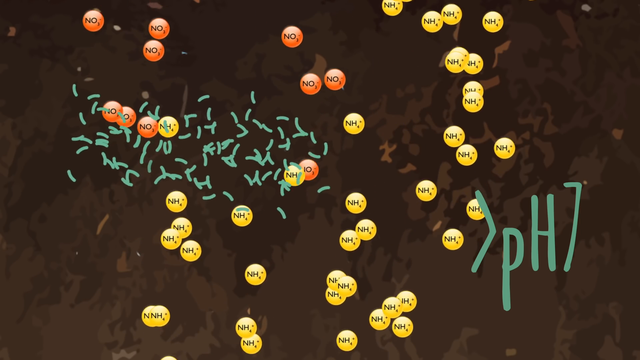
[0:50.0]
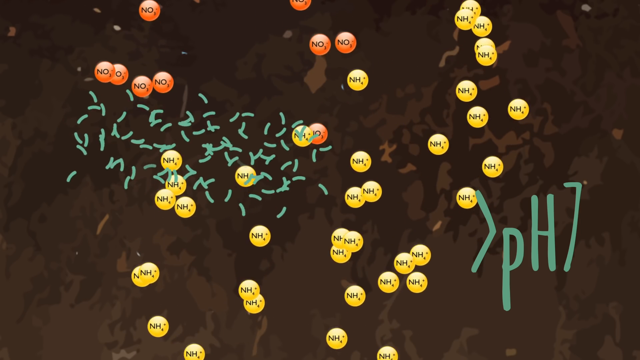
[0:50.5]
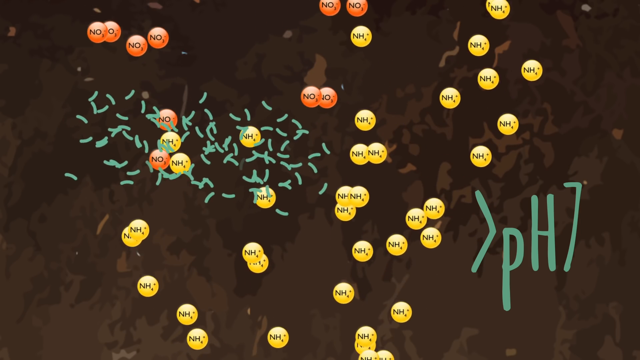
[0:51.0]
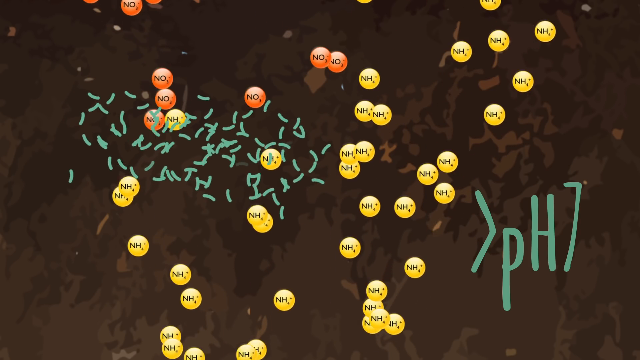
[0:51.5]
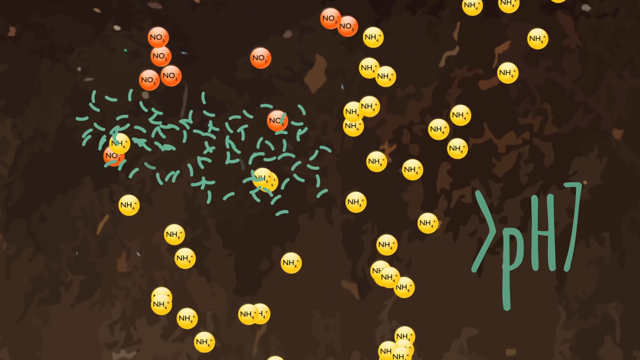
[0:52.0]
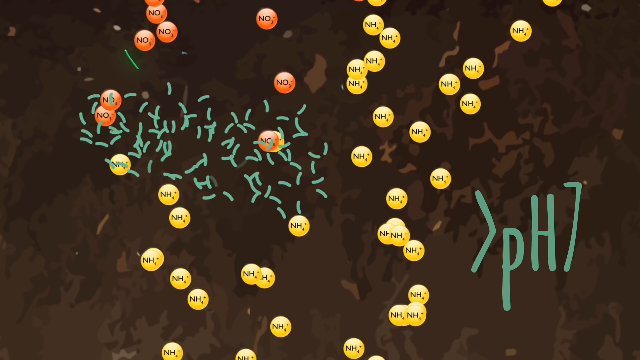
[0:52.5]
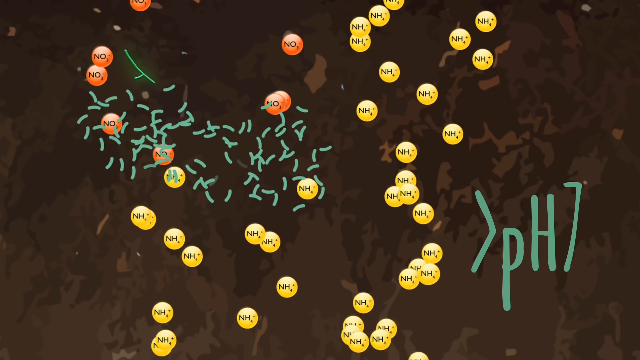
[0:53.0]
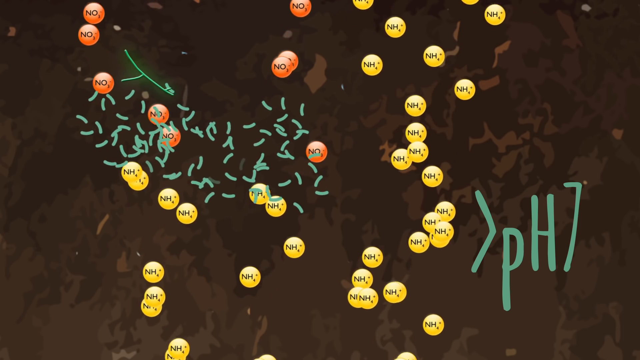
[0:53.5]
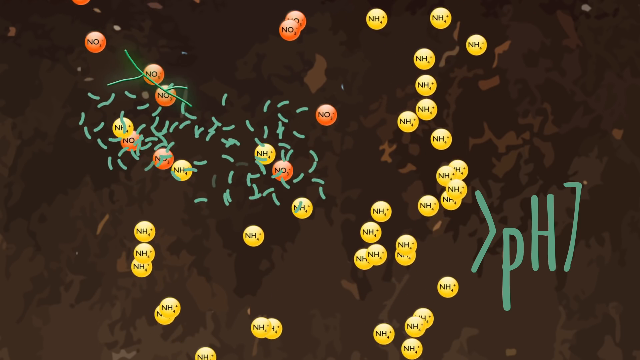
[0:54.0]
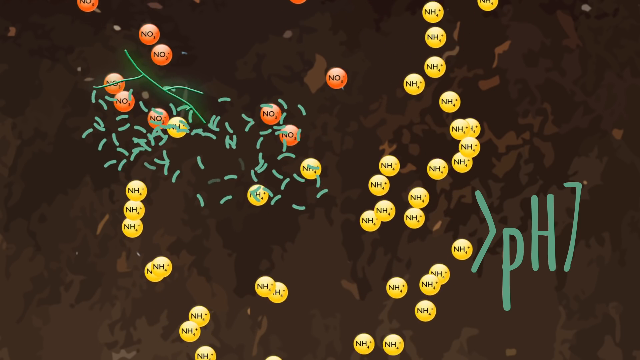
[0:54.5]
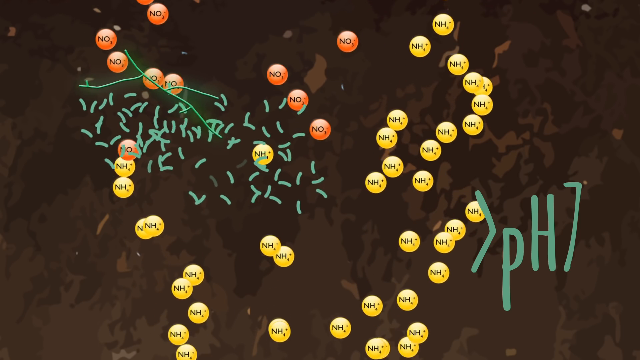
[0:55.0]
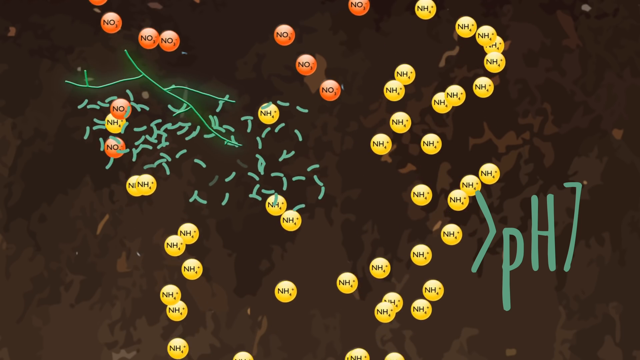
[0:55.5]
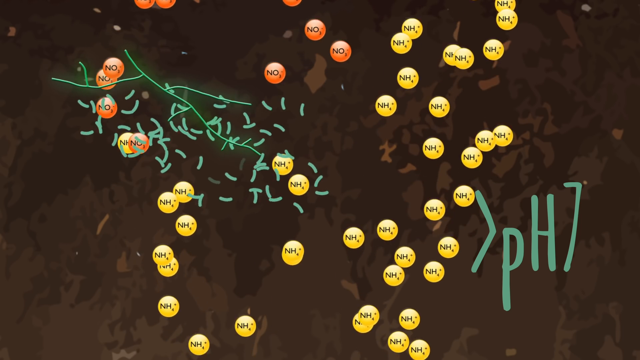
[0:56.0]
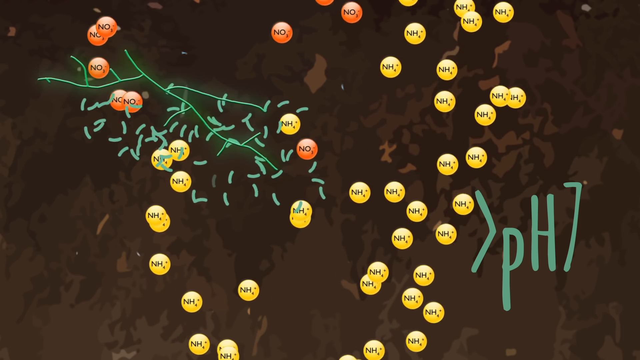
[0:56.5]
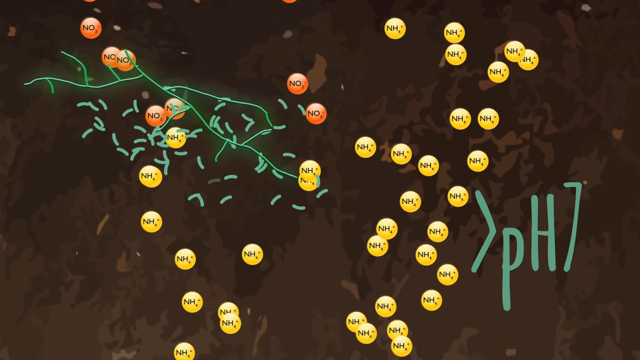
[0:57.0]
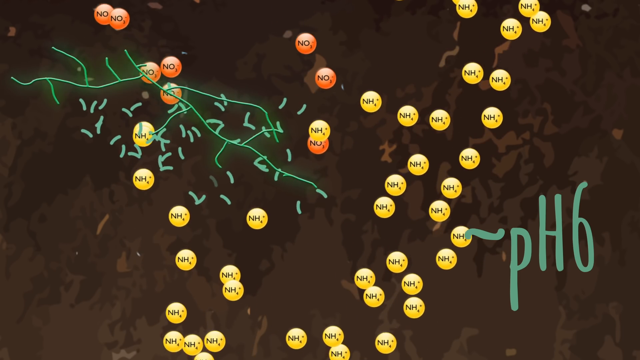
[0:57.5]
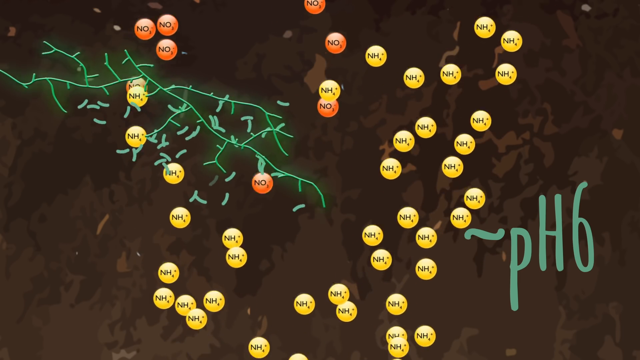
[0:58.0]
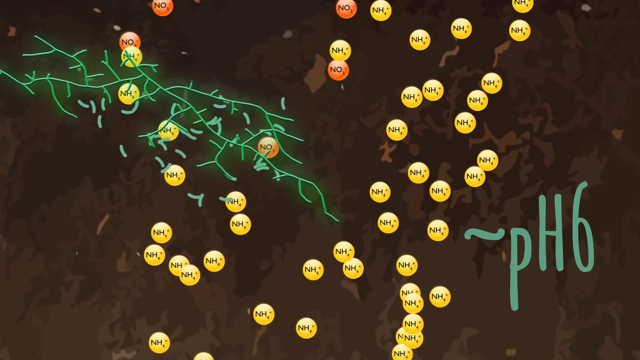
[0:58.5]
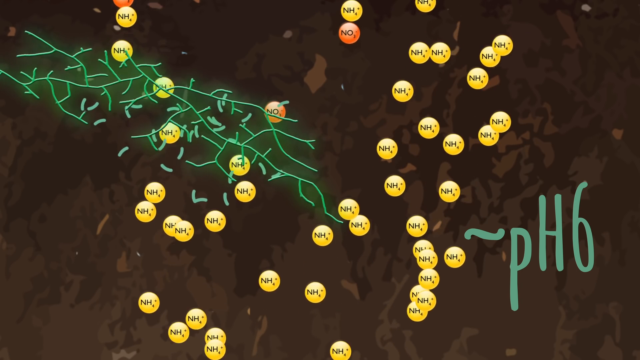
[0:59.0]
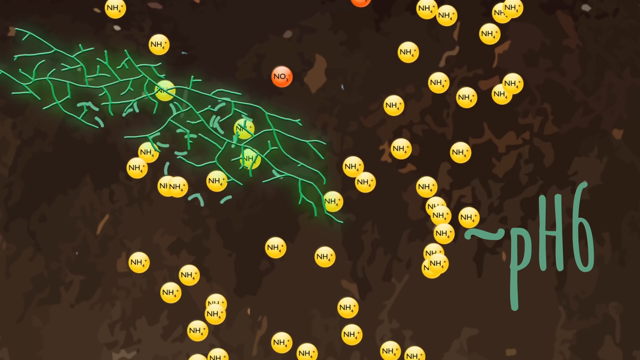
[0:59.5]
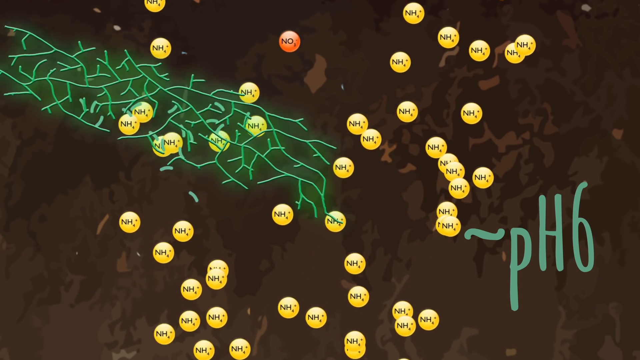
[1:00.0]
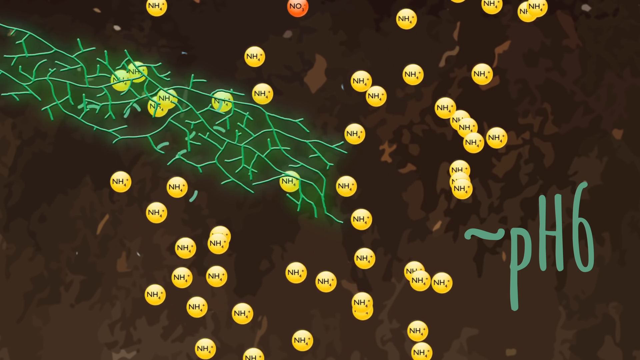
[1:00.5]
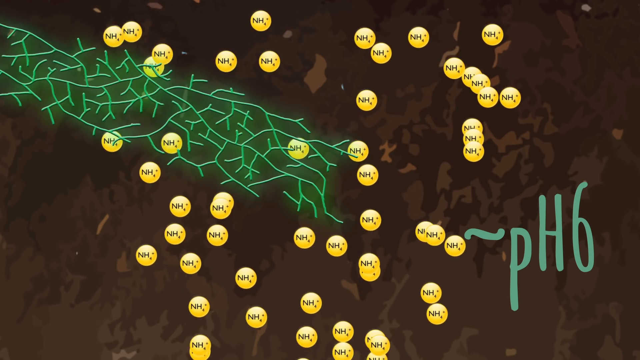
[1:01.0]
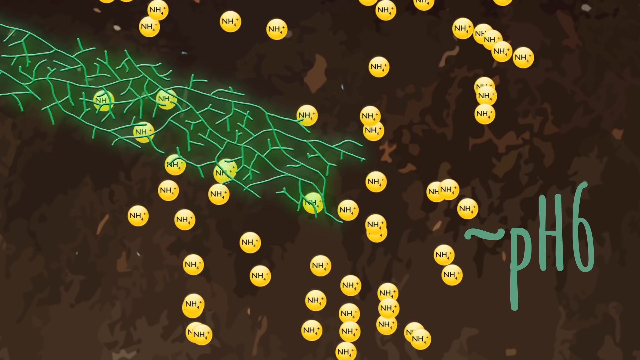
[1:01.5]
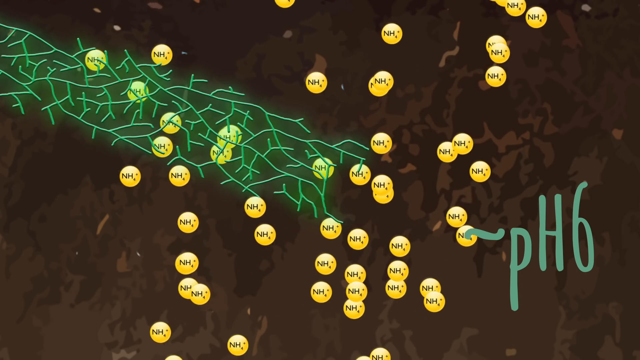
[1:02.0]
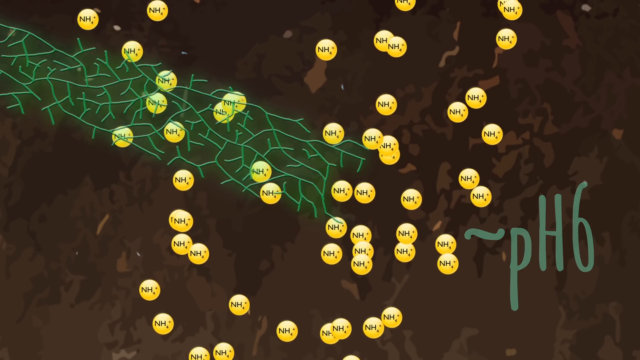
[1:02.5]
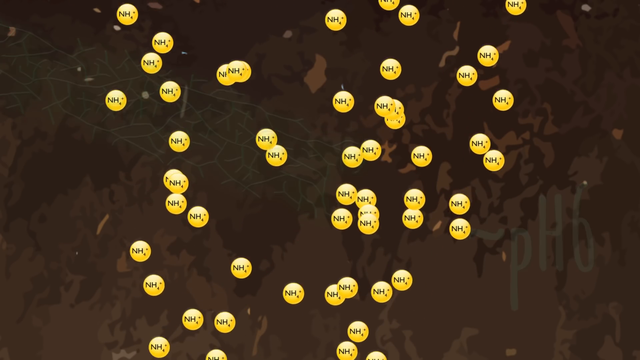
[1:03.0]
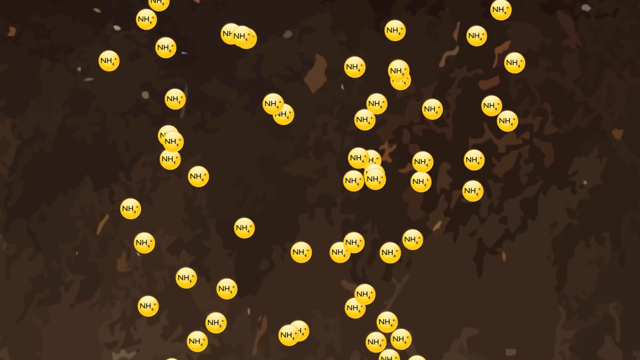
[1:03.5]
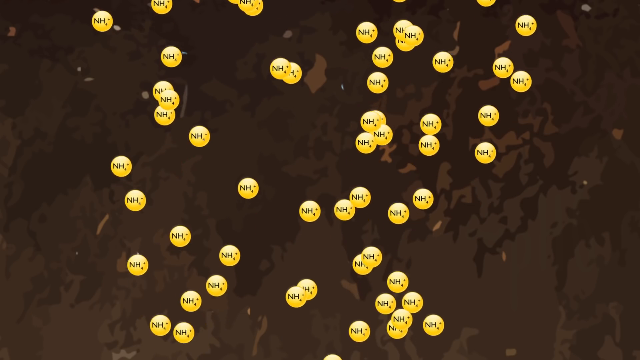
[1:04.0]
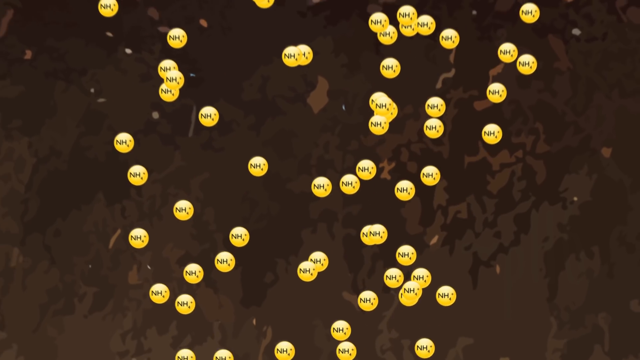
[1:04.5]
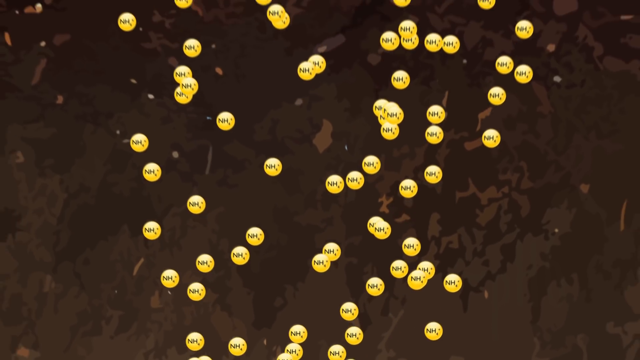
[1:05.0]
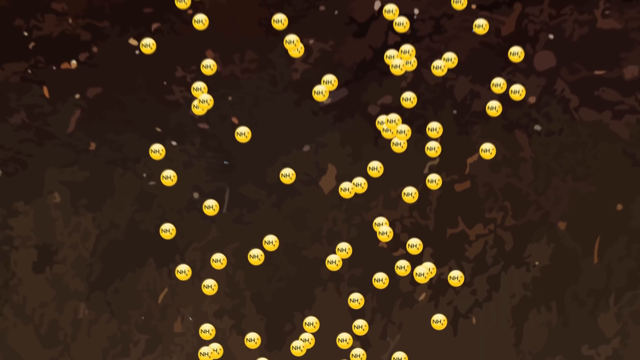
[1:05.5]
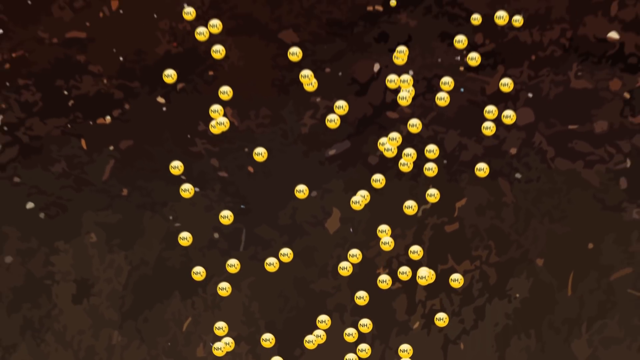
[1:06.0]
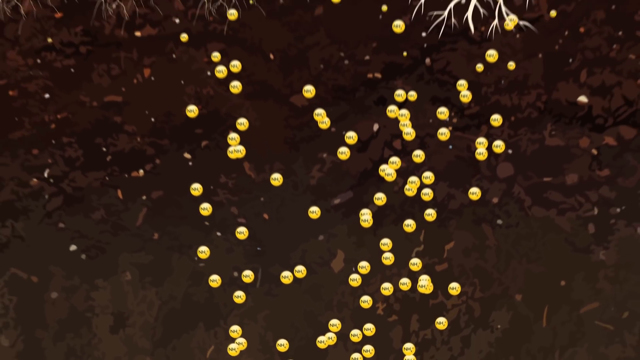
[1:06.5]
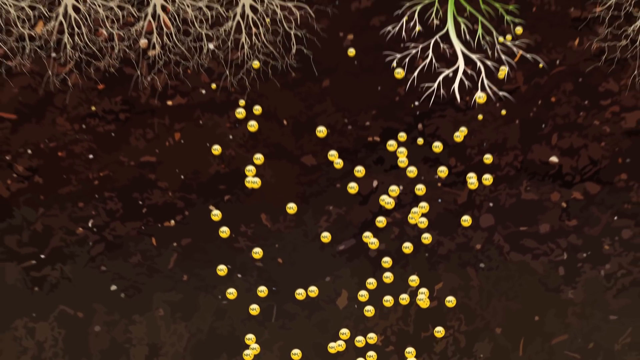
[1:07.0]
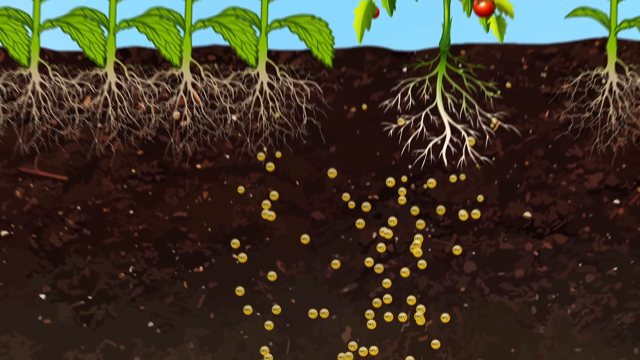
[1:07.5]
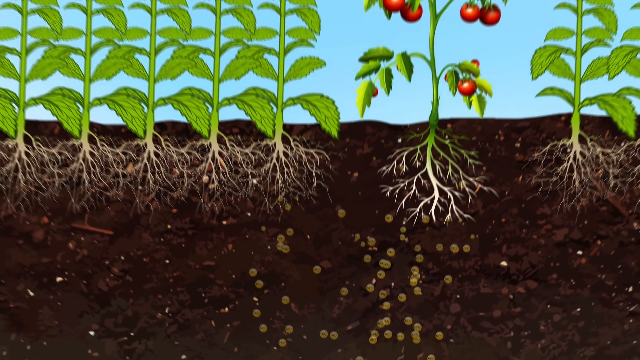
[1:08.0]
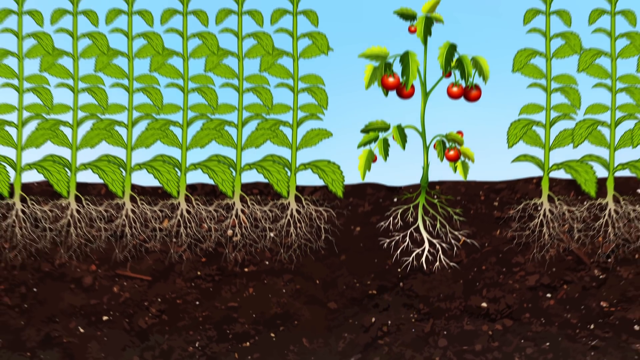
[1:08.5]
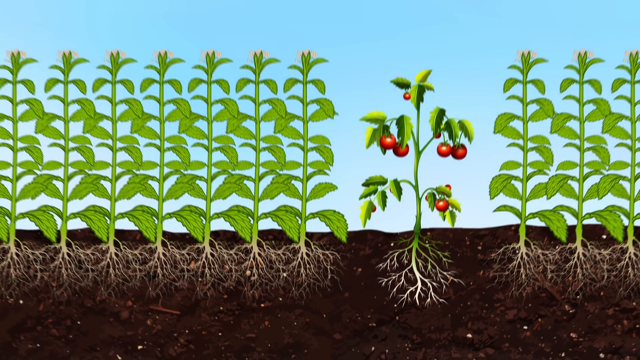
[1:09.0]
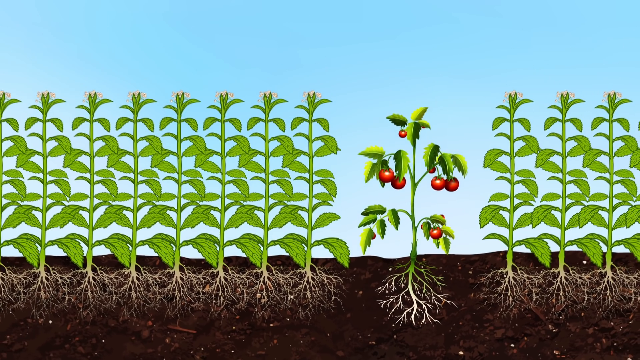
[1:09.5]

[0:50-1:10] On a brown background, an arrow in the lower right corner points to text reading "PH7". In the middle of the screen are yellow and orange circles and some green lines, and the circles seem to be going upward. More green lines that look like roots slowly come downward, and the text on the lower right changes to "PH6". The background stays brown but changes to just yellow circles going upward. The circles rise until the picture changes to what looks like plants and their roots down on the brown surface: many green plants, with one in the middle that has what appears to be red tomatoes on it, and blue sky behind them.